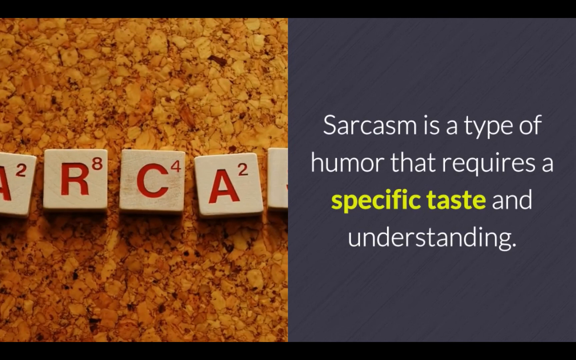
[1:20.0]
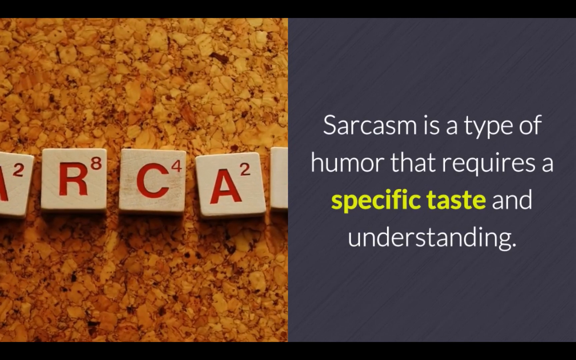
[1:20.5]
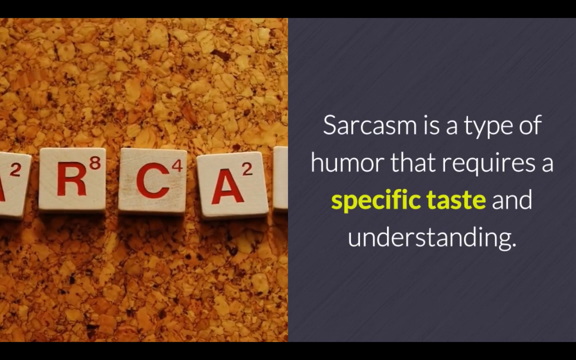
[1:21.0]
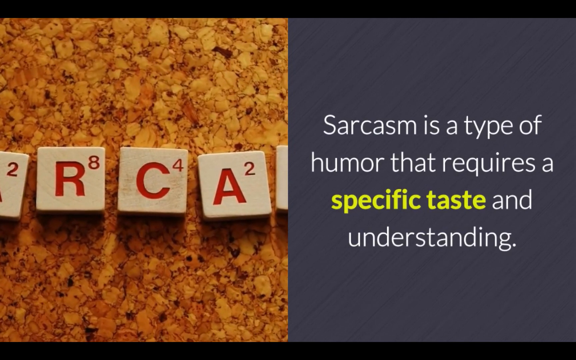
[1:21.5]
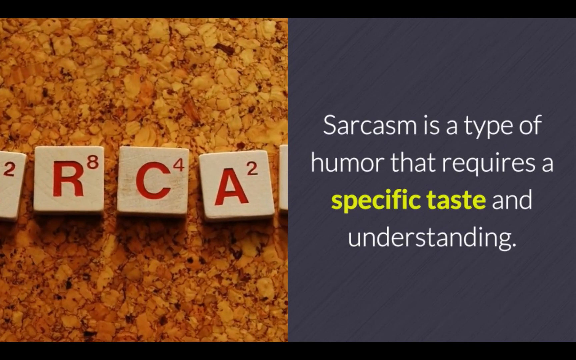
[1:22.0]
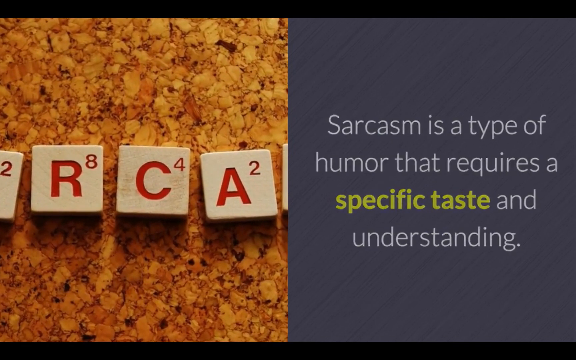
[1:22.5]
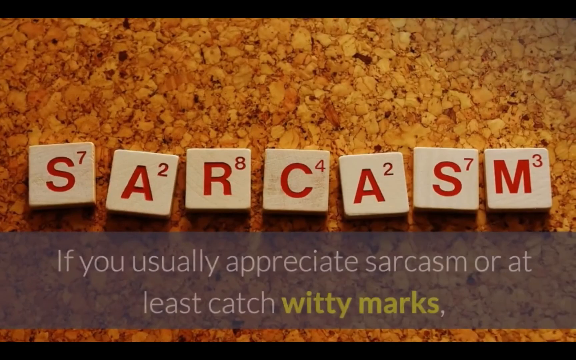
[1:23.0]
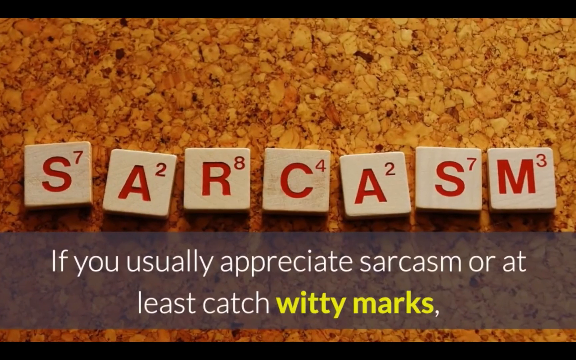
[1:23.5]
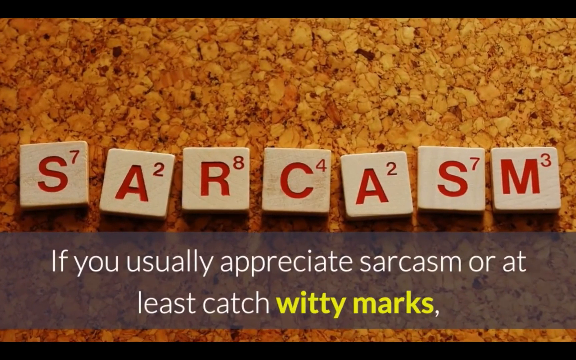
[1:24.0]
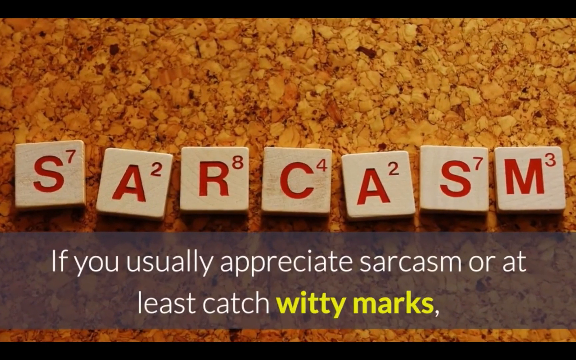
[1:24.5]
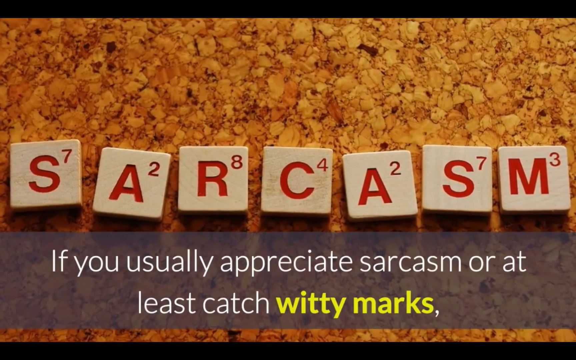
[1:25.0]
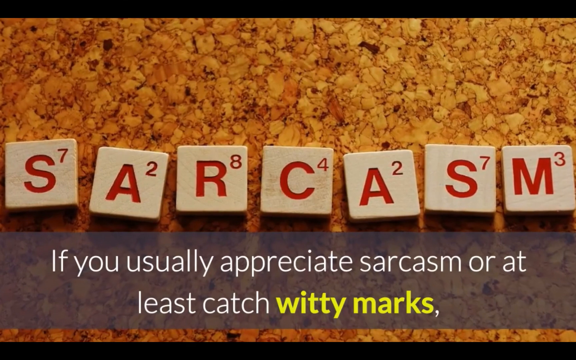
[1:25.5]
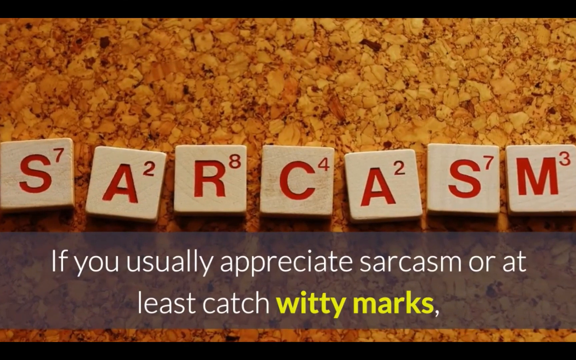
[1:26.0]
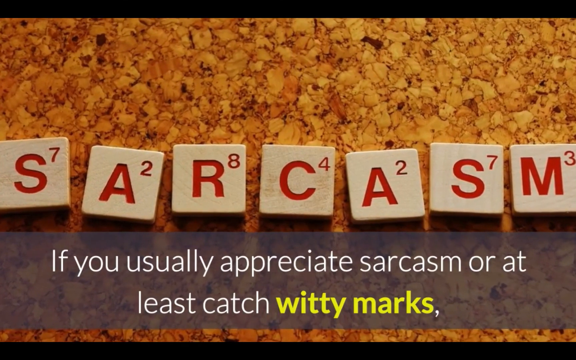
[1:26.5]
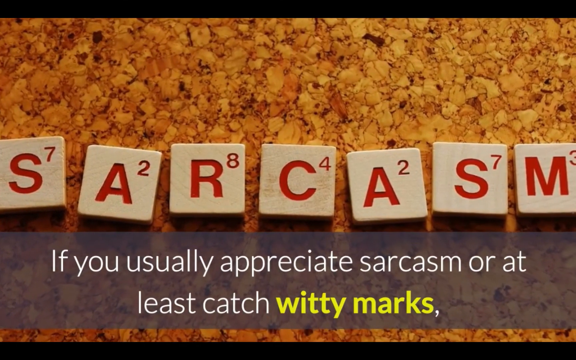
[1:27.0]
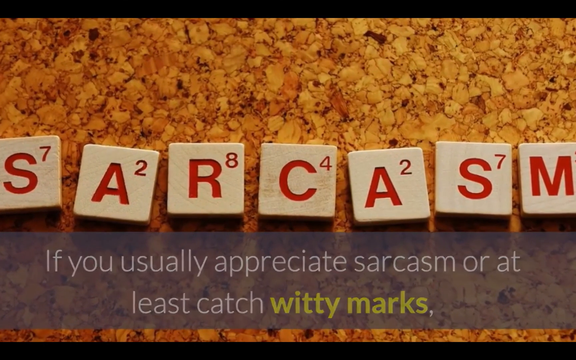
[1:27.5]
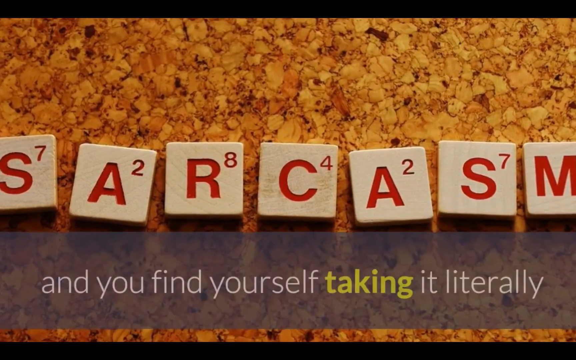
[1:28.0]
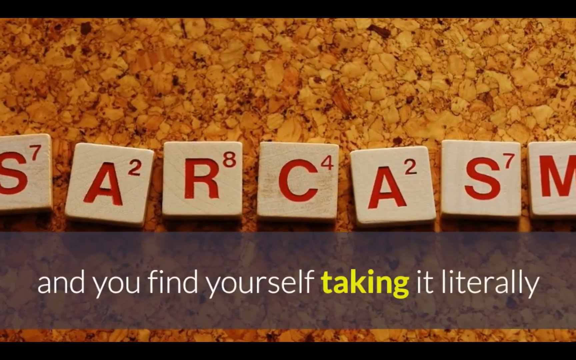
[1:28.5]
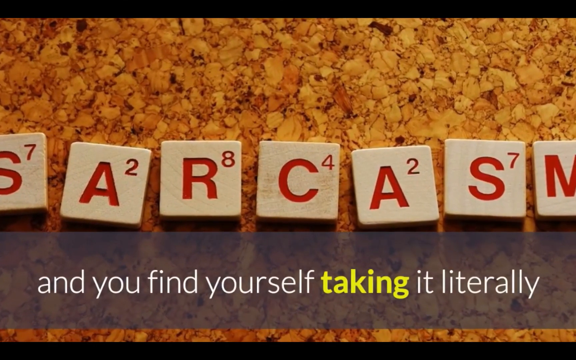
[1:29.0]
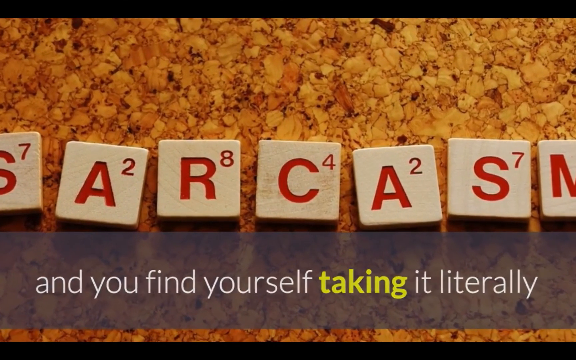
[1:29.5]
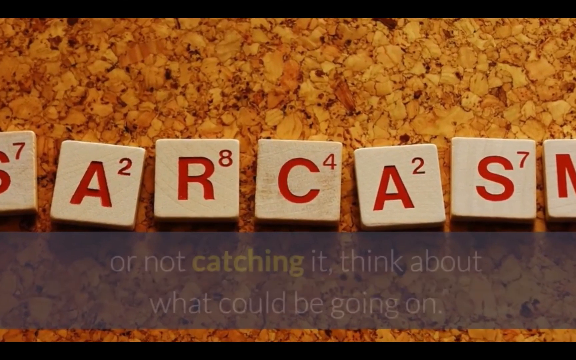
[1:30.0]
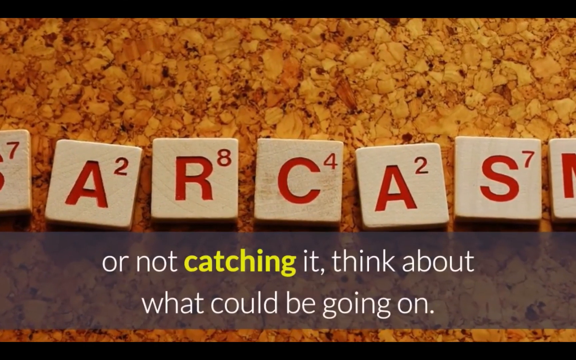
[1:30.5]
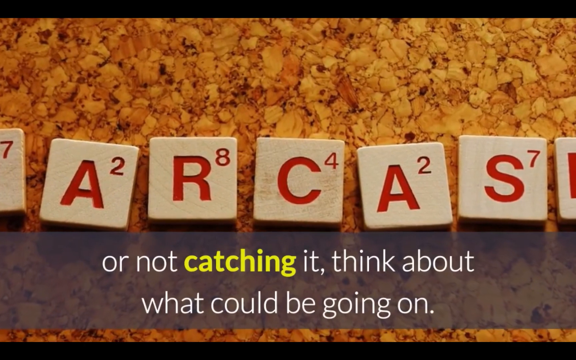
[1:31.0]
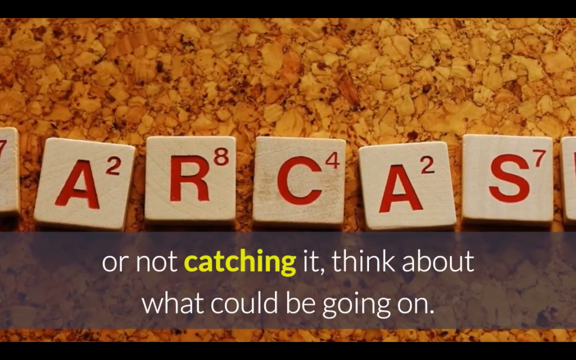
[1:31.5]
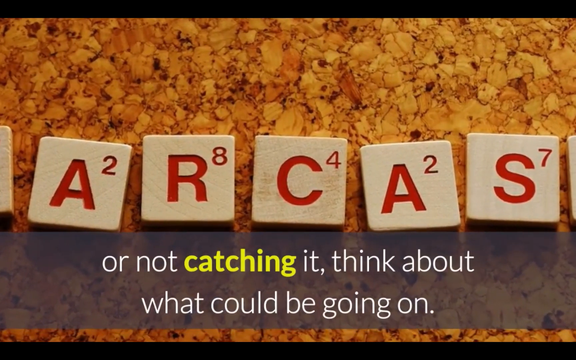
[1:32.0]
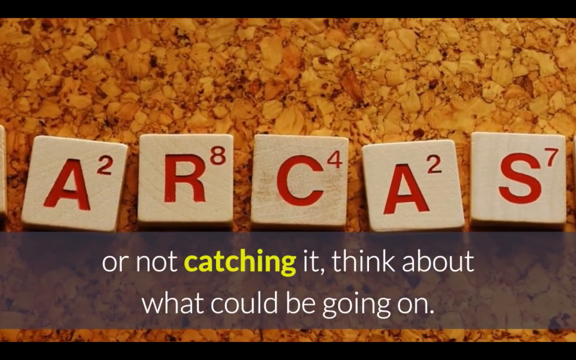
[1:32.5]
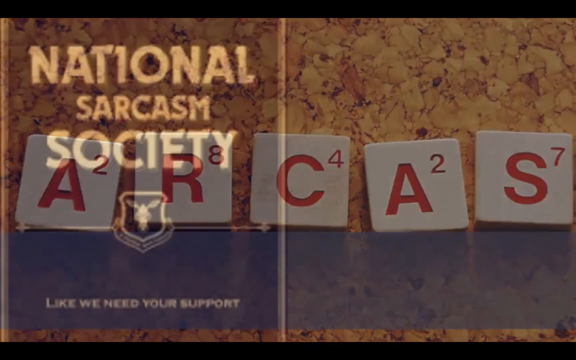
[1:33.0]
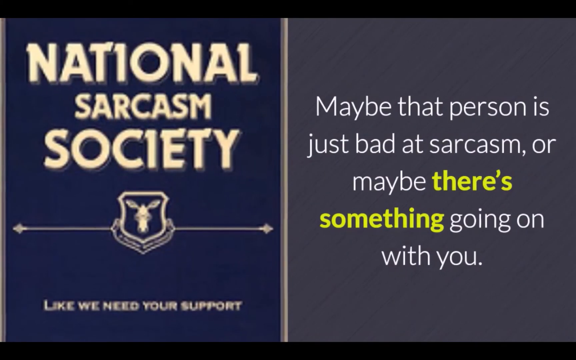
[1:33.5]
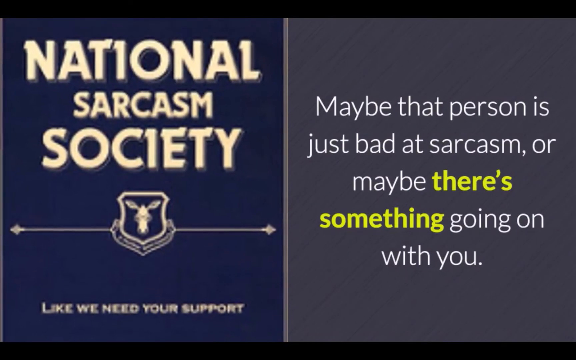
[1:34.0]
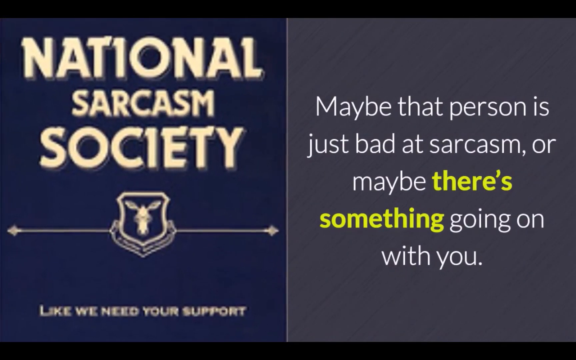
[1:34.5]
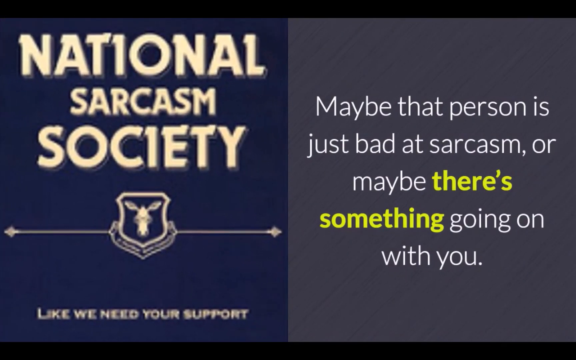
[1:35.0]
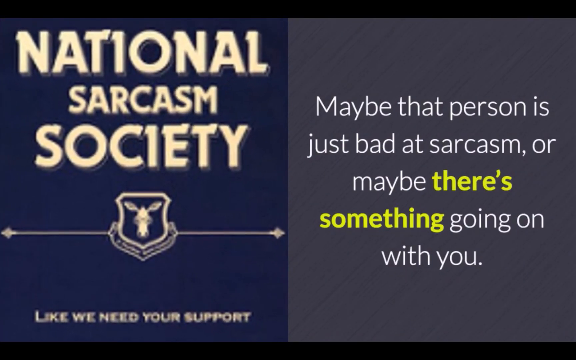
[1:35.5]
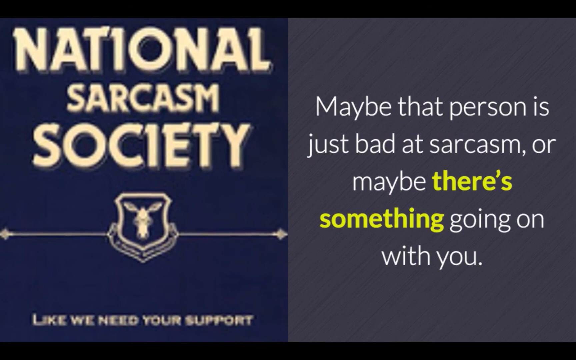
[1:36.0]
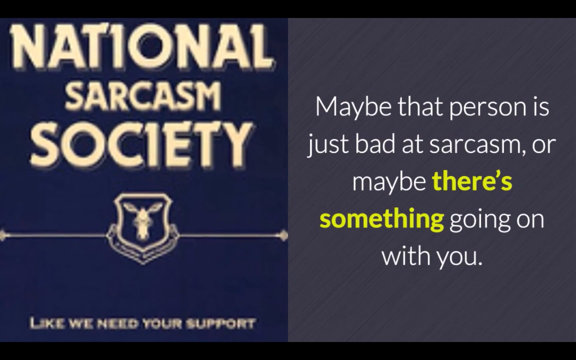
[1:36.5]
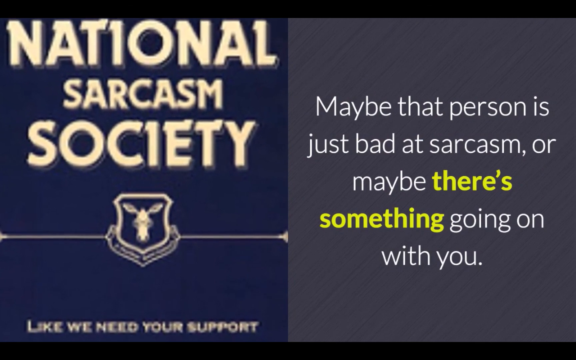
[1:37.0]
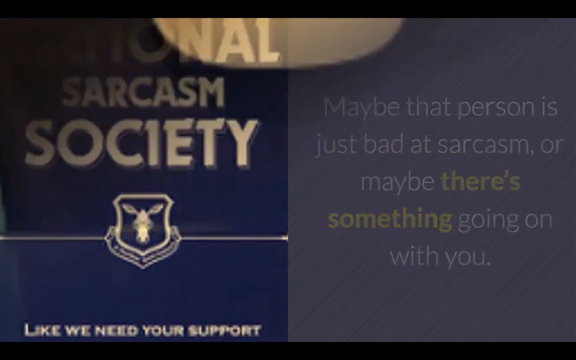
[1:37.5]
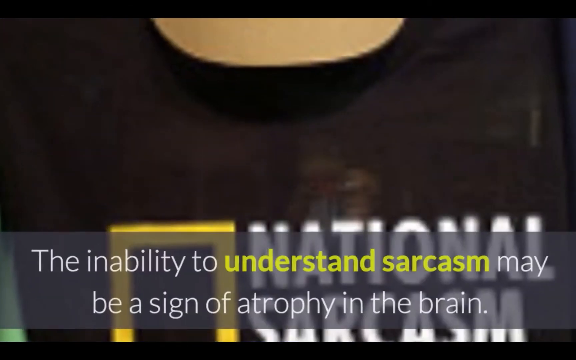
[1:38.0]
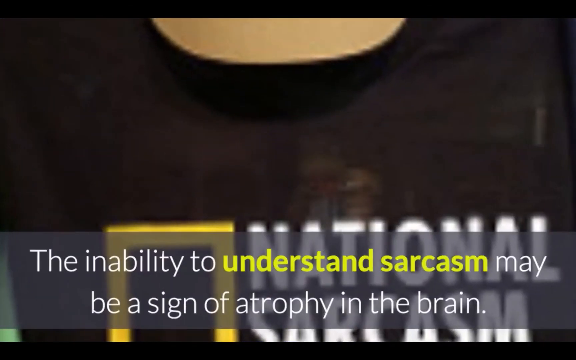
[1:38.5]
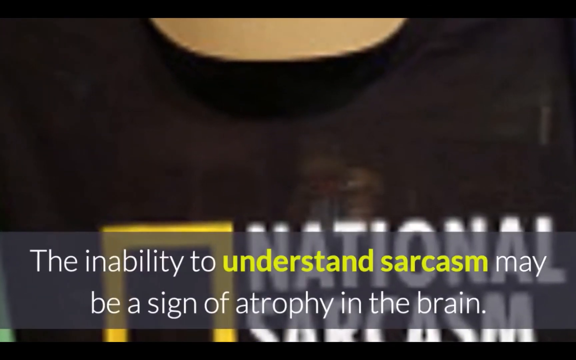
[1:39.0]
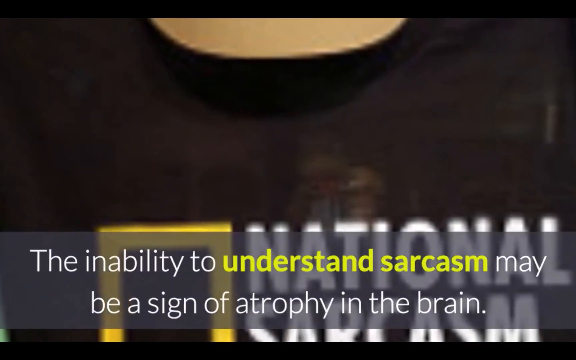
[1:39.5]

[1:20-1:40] Seven white cubes have red letters spelling "SARCASM." A slide shows two columns, the right one with a gray background. The left column has white text reading "National SARCASM Society" with a page on it. The right side has white text reading "maybe that person is just bad as SARCASM or maybe there's something going on with you." The scene slides to a person wearing a black t-shirt with white words reading "National SARCASM," with a yellow box beside it. Text on the visual reads "the inability to understand SARCASM may be a sign of atrophy in the brain."